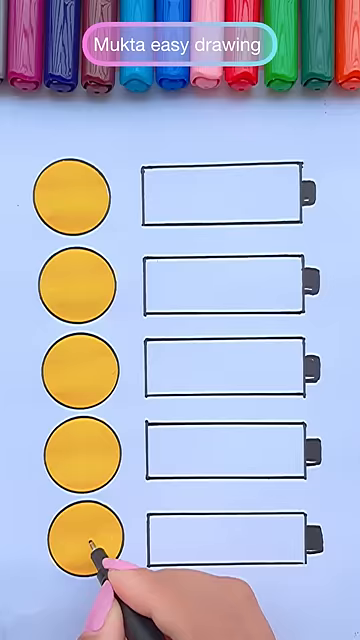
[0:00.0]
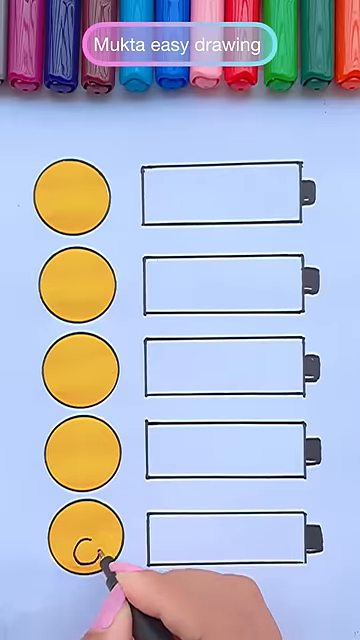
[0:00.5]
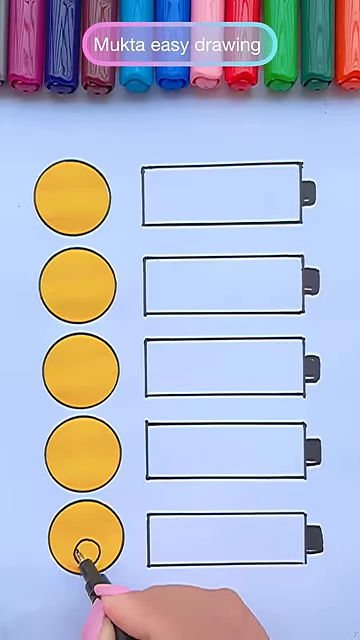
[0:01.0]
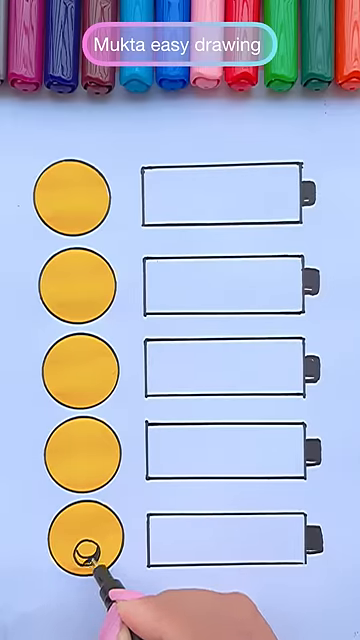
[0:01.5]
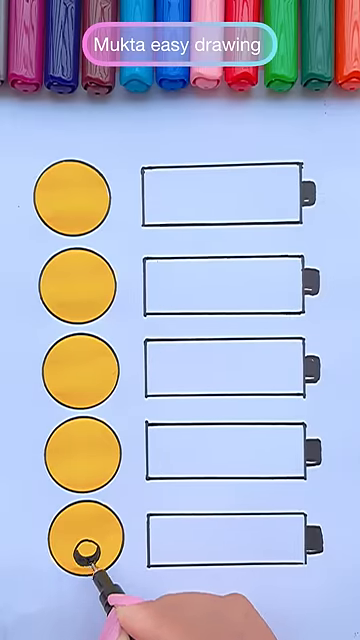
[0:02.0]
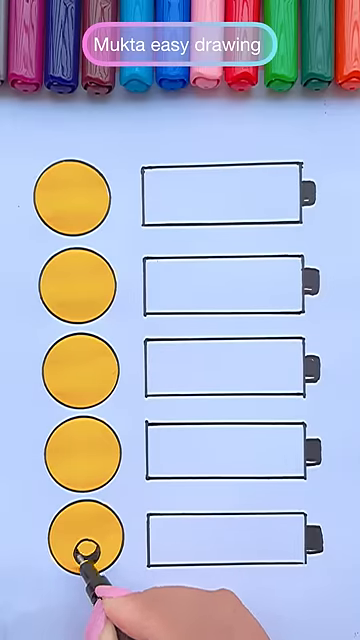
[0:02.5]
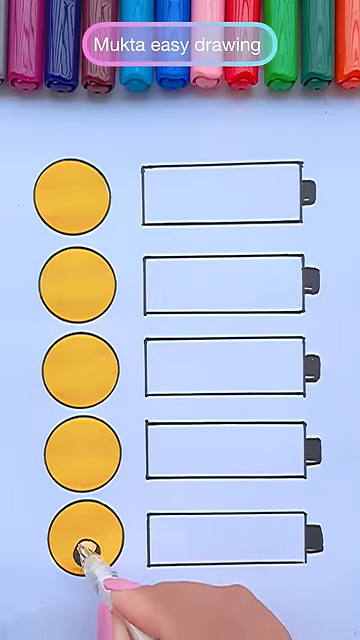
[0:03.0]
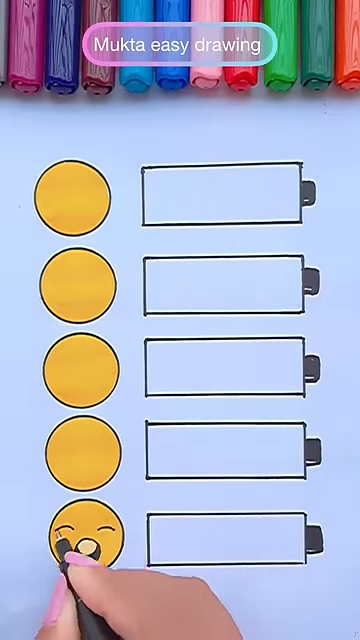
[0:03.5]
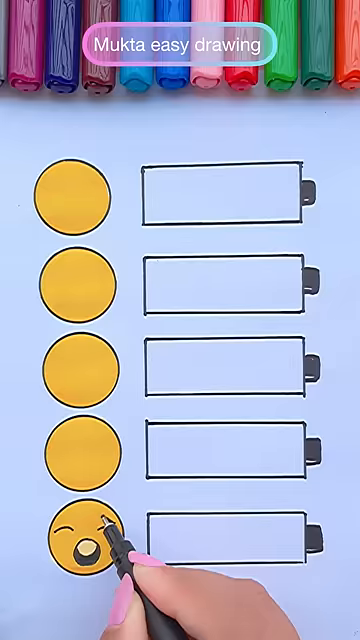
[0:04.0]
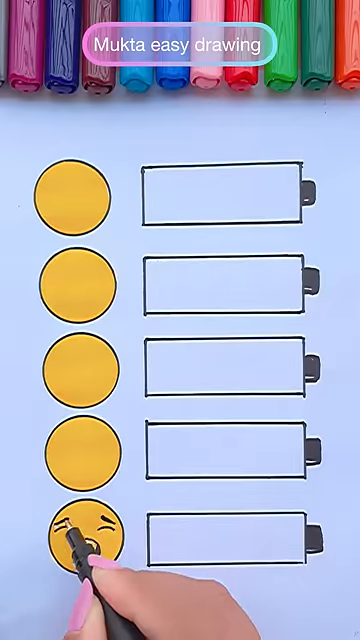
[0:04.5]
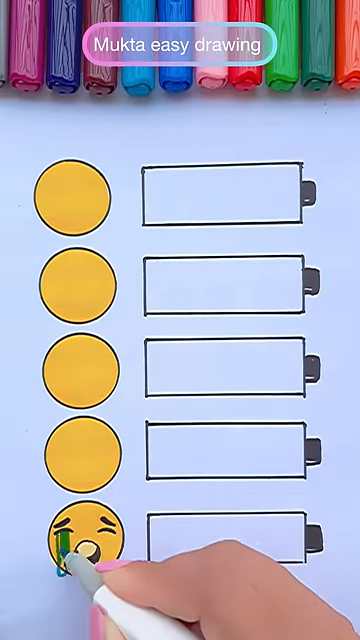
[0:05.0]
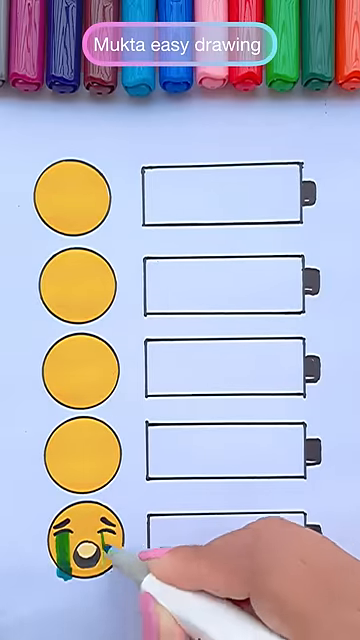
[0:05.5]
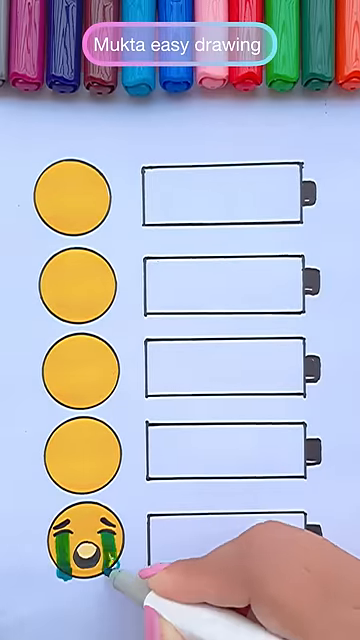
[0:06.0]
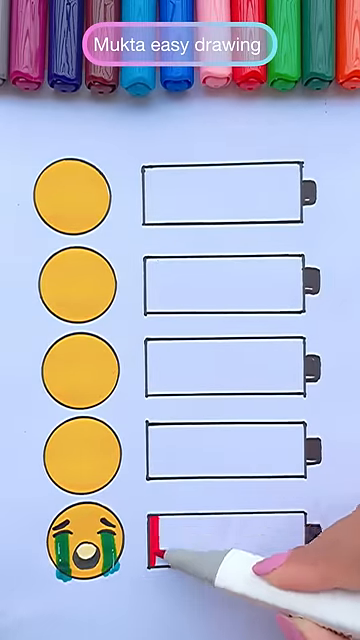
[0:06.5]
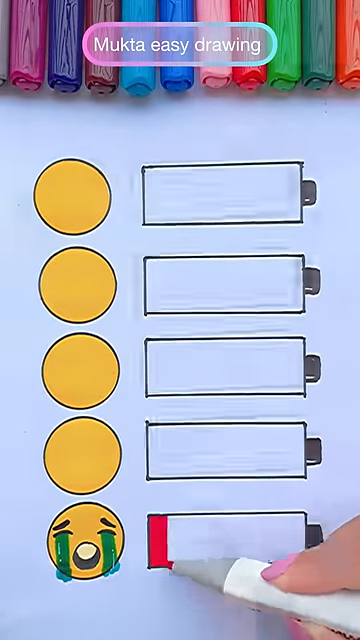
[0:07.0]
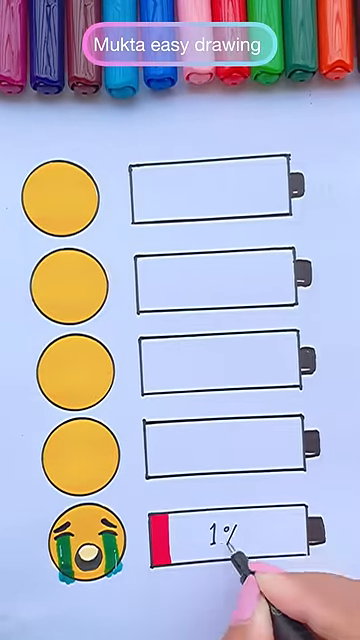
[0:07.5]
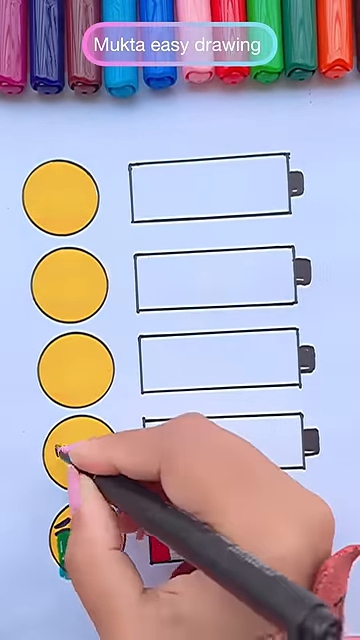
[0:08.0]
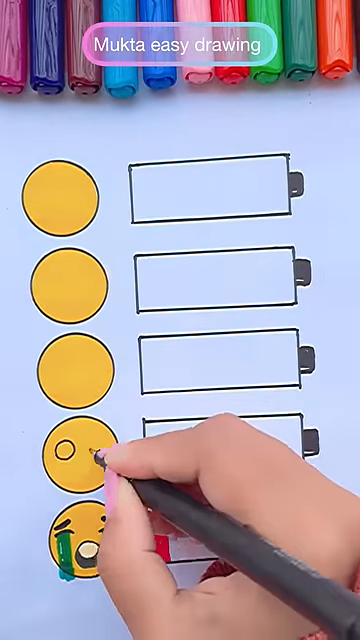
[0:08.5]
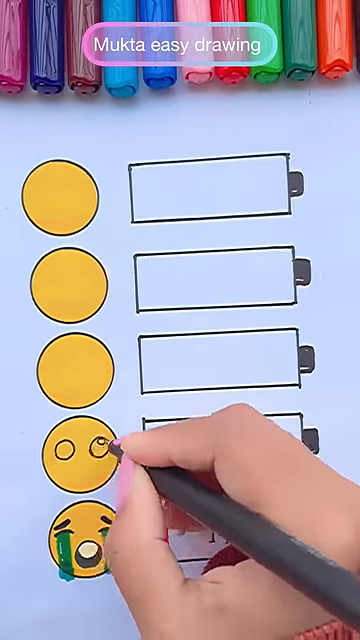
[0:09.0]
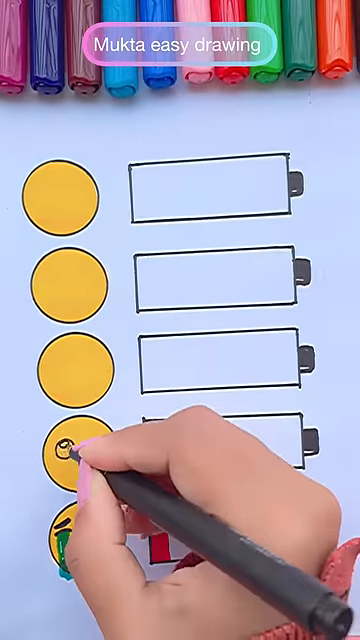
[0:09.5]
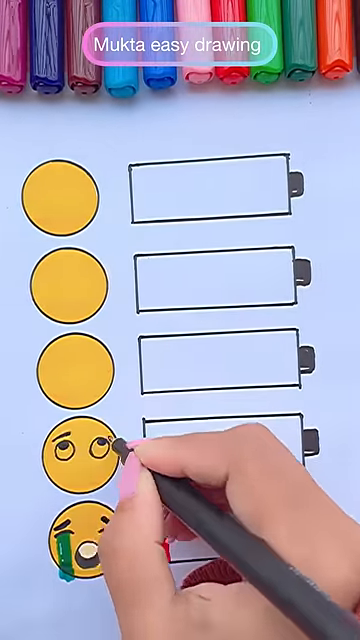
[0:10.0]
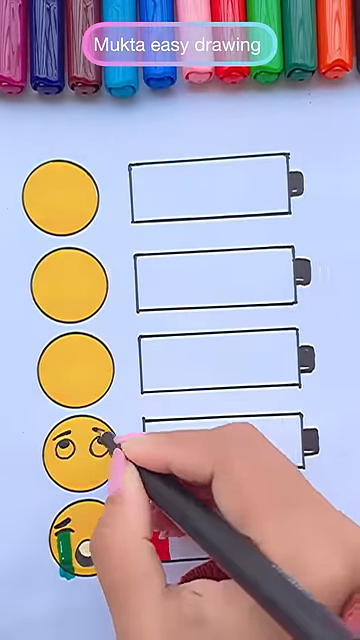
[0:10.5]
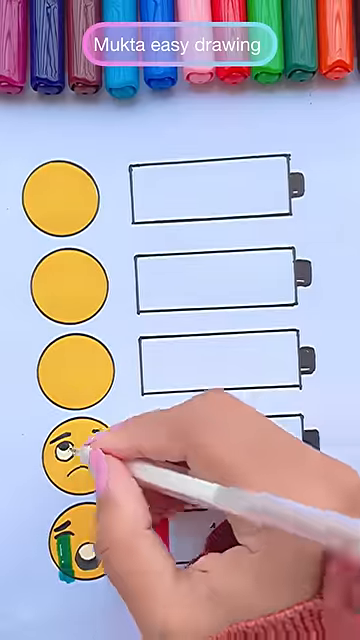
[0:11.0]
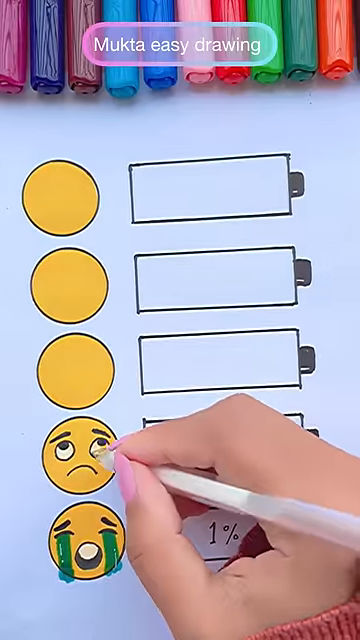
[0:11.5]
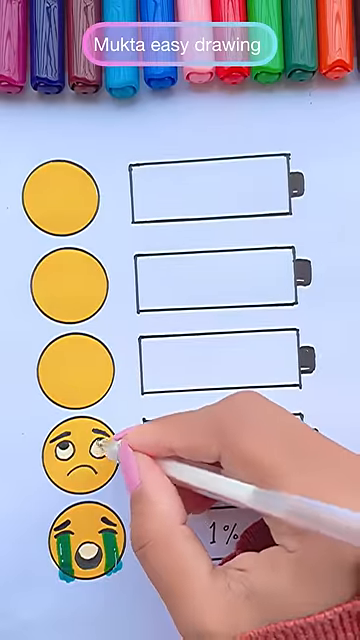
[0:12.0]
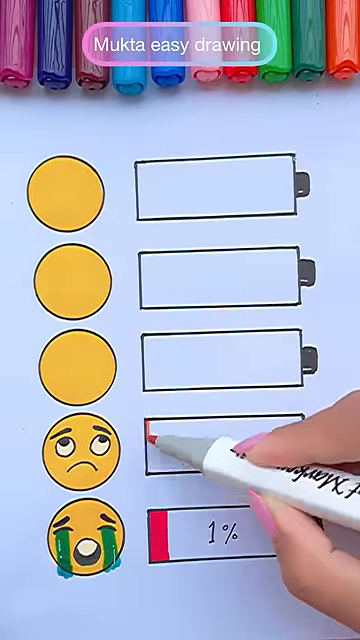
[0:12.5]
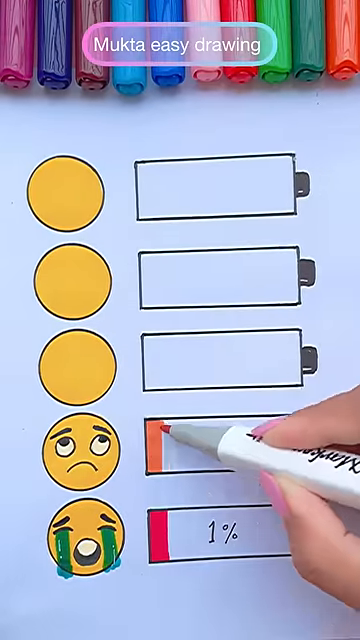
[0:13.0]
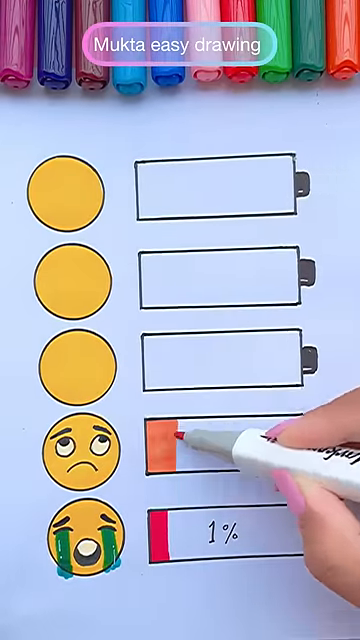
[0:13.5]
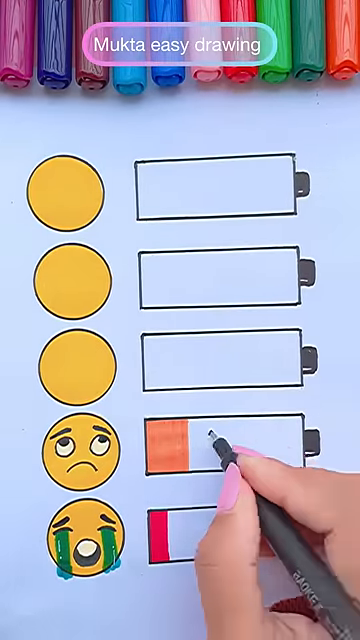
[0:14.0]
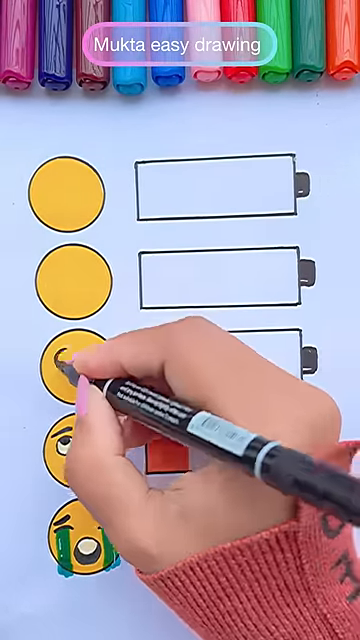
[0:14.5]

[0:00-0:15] In a kind of live-action video, a person with some colored markers draws on a piece of paper that has a drawing of five batteries. To the left of each battery is a blank yellow circle. The visible hand fills in a very small section of the bottom battery in red, with "1%" on the battery, and a crying emoji. On the next battery up, 25% of the battery is filled in in red, the number "25%" is written on it, and its emoji is frowning and eye-rolling. The hand then starts to draw in the third yellow circle.